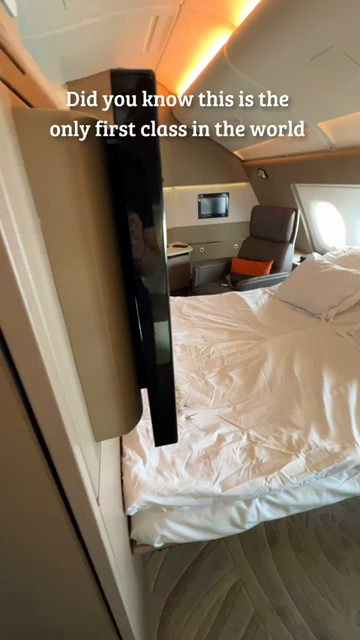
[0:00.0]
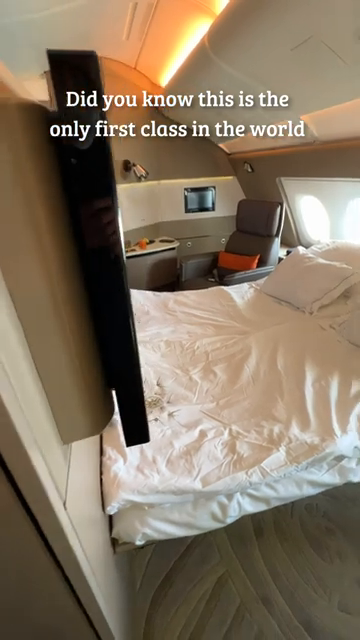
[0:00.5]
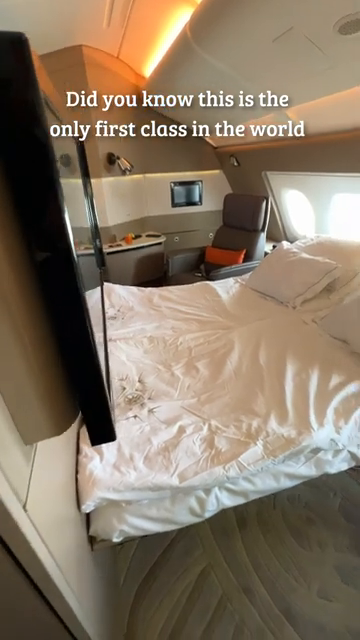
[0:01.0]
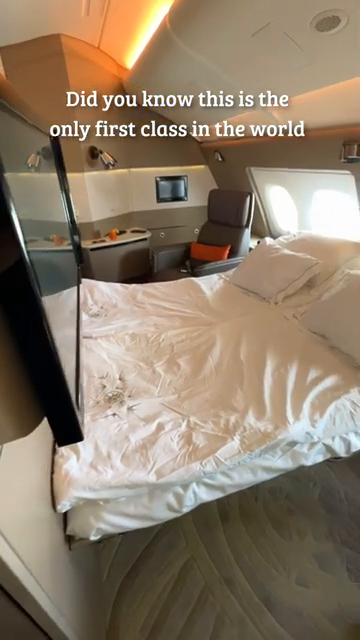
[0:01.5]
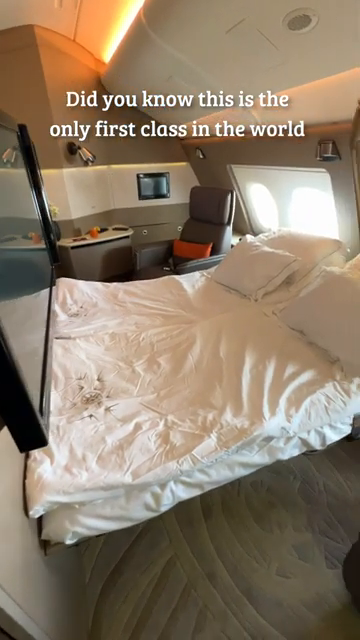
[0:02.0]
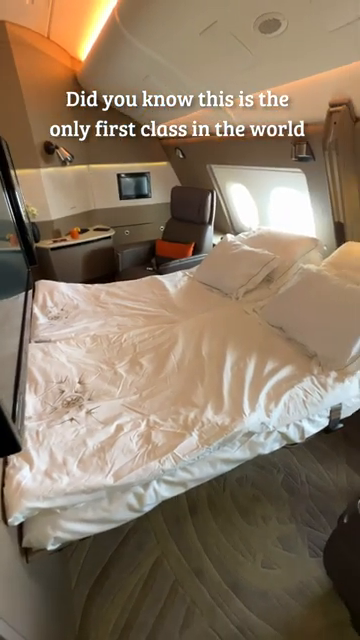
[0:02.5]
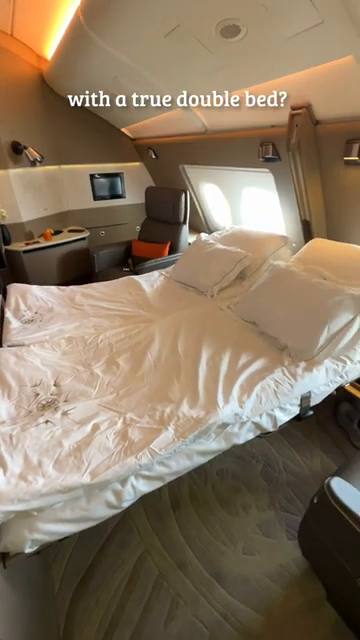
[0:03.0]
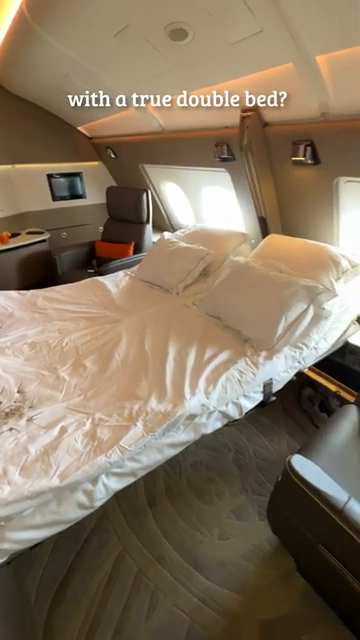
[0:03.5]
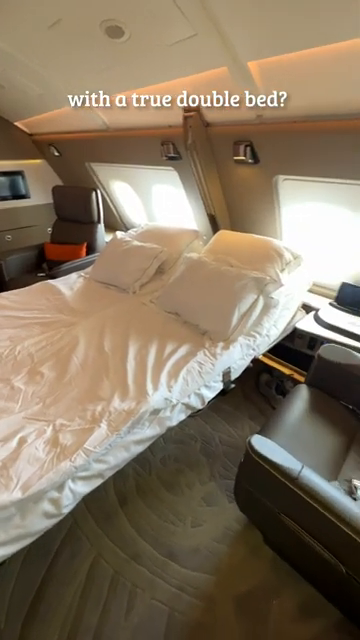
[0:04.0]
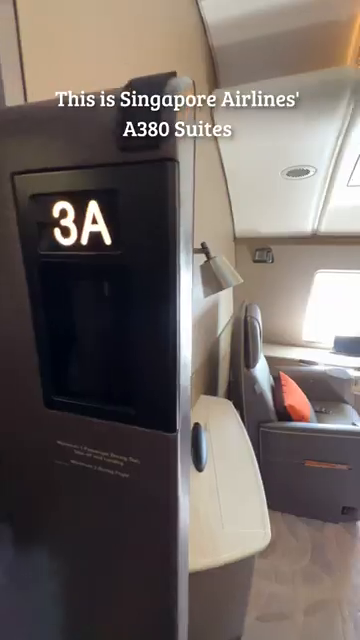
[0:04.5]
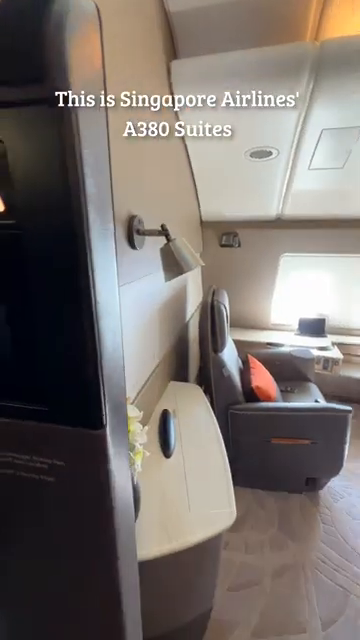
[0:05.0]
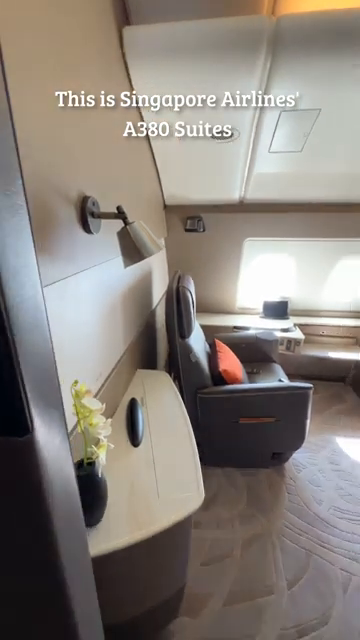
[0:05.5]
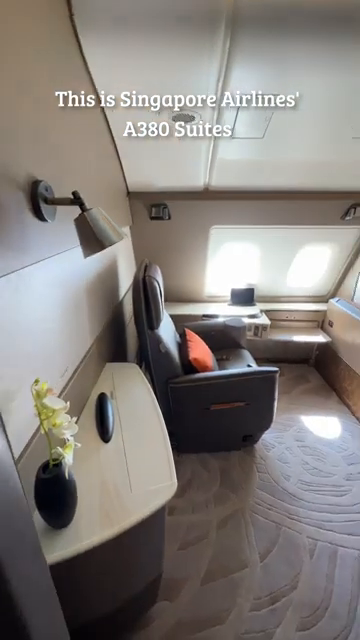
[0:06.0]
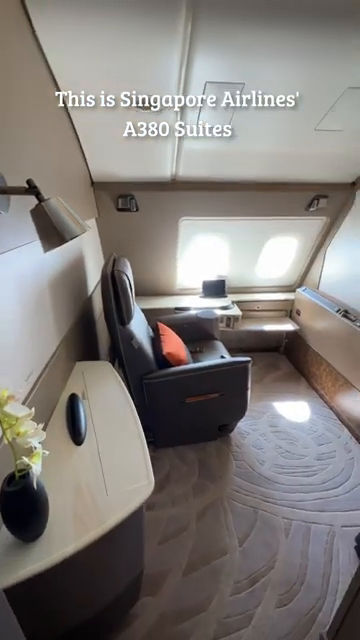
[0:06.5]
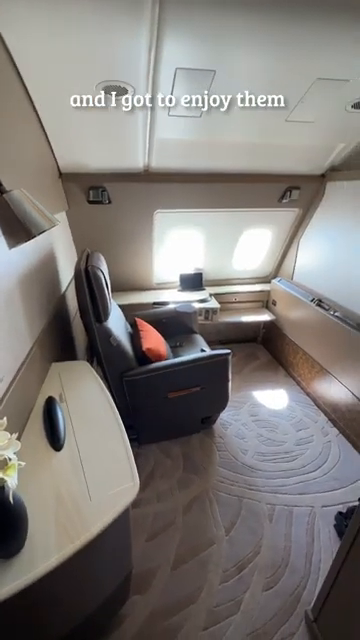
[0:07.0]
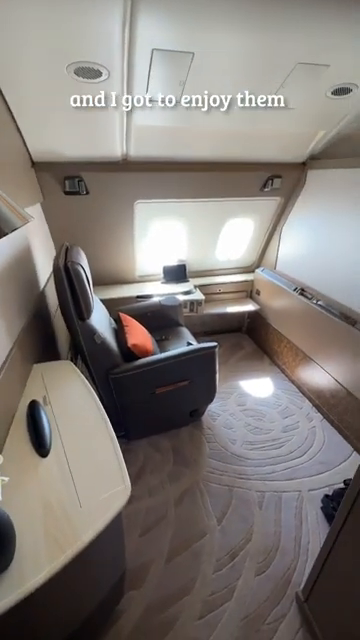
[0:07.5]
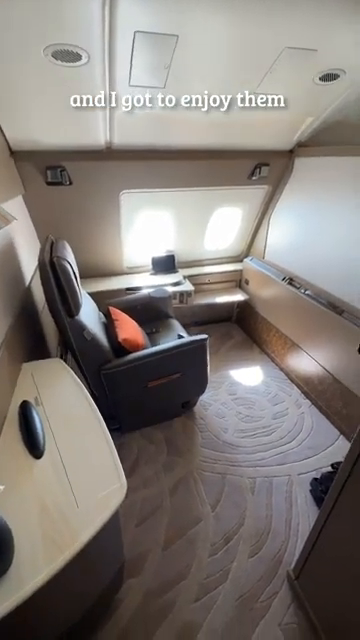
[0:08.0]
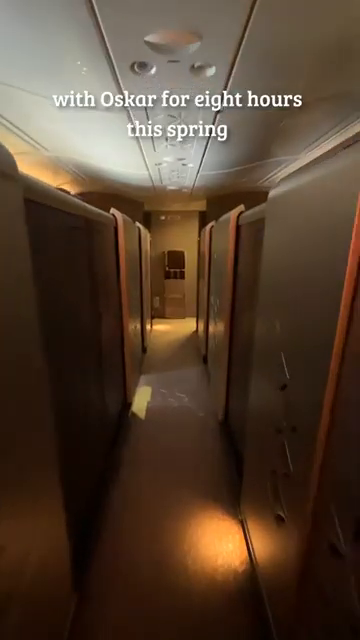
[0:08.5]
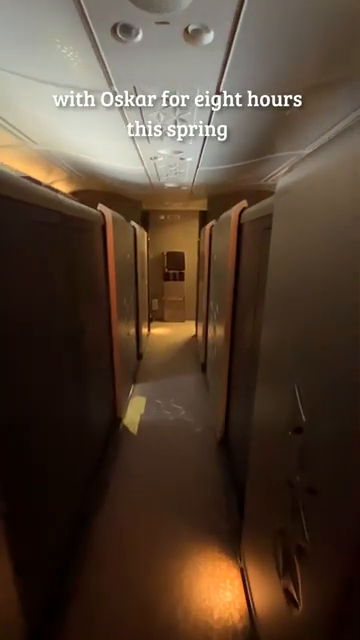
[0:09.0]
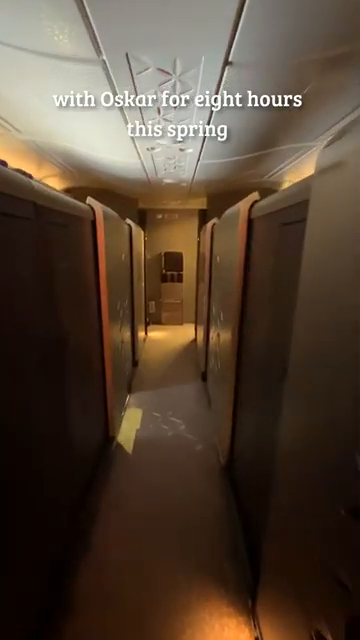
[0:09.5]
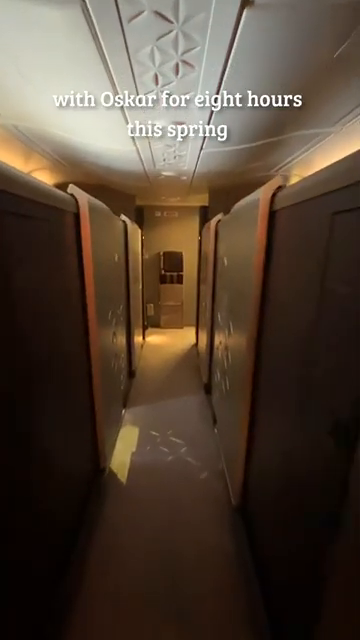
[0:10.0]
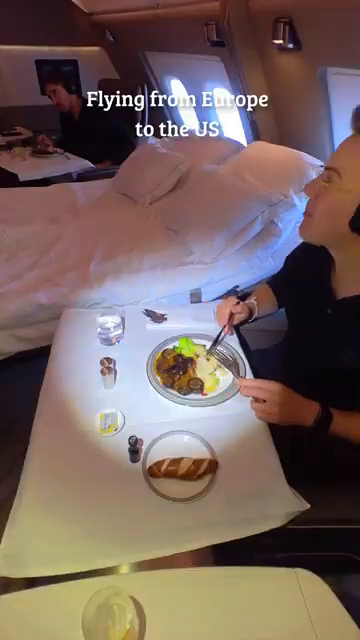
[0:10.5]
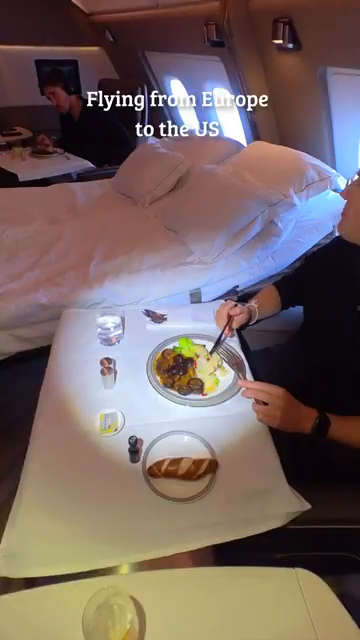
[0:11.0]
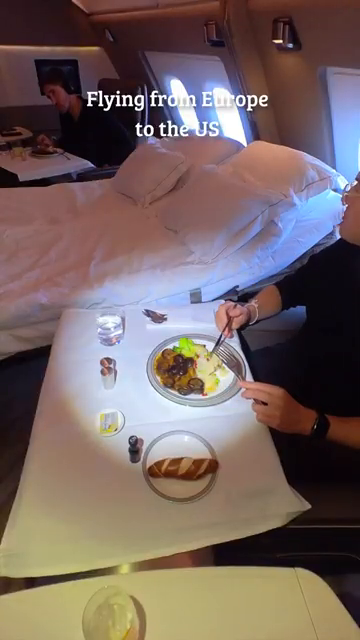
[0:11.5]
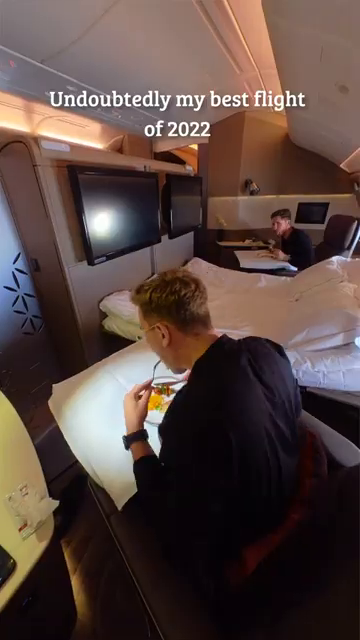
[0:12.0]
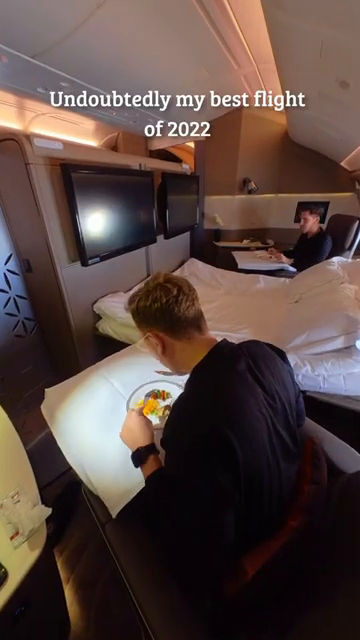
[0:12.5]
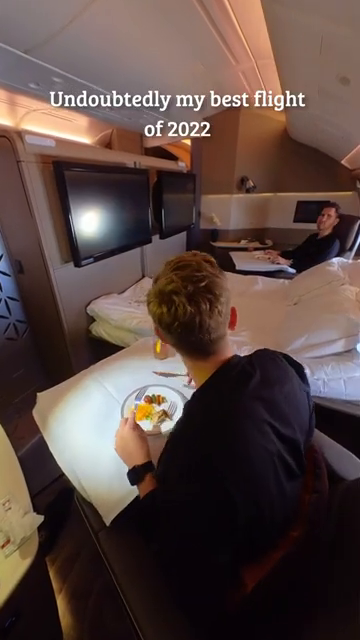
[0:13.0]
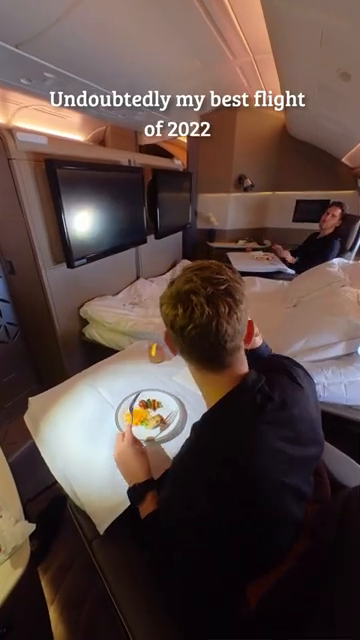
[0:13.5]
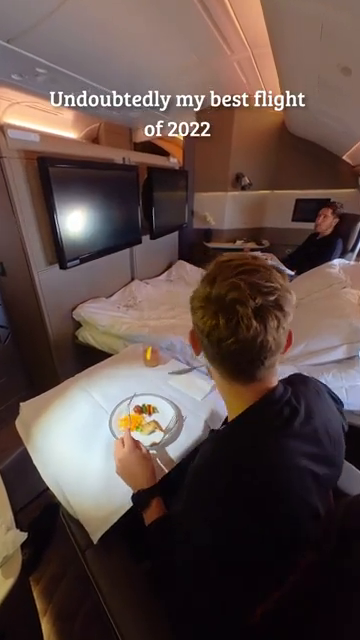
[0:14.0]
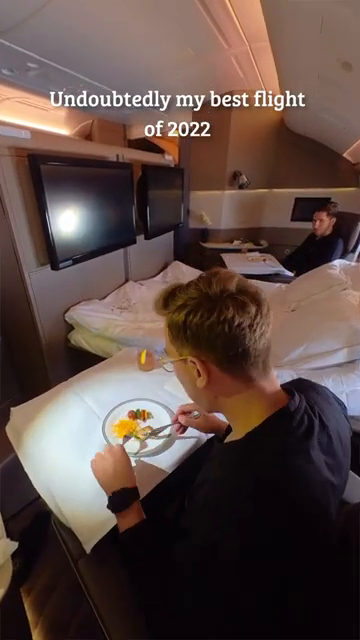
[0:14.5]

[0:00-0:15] This YouTube video is titled World's Best First Class Airplane Suites. It opens inside an airplane suite that is very large. A double bed is in the center, and on either side is a chair with a small lounge area, apparently making the suite suitable for two people. Two large TVs are in the center, right in front of the double bed. There are also two very large windows through which the outside of the plane is visible. The video then switches to another suite that shows only a table and chair area, and then to a walk down a very long hallway, presumably through the first-class area with suites on either side.